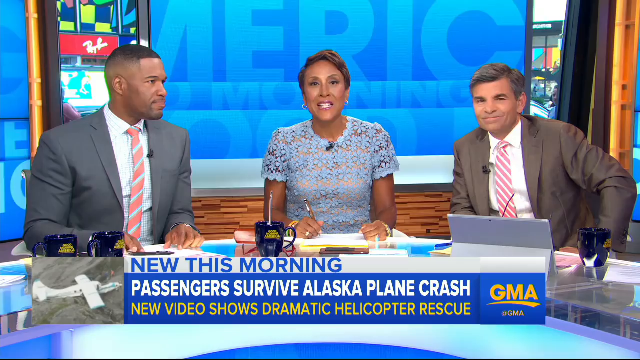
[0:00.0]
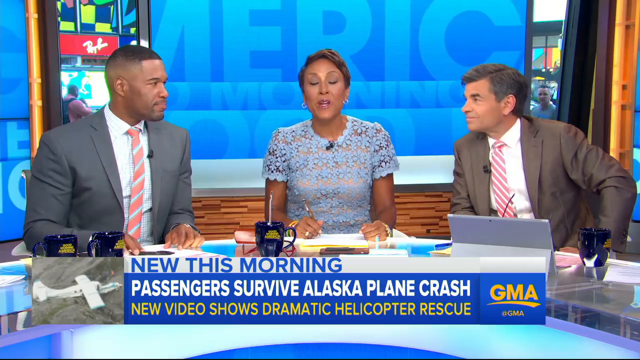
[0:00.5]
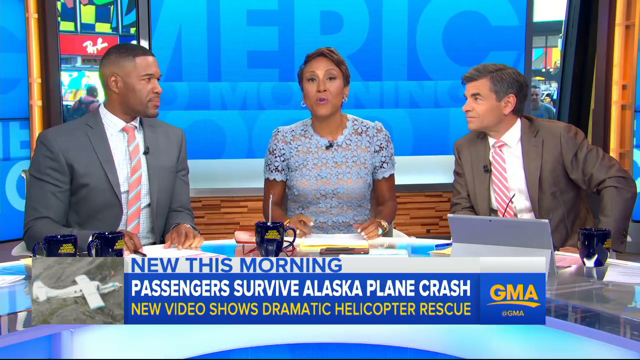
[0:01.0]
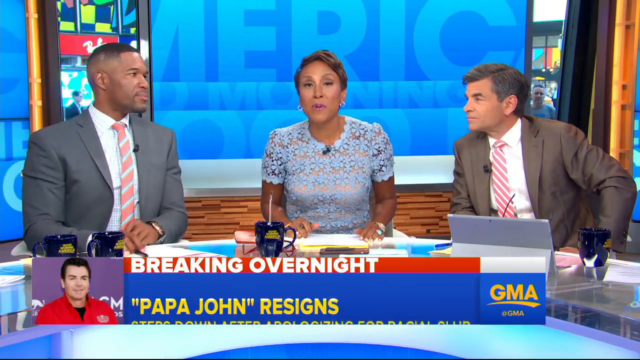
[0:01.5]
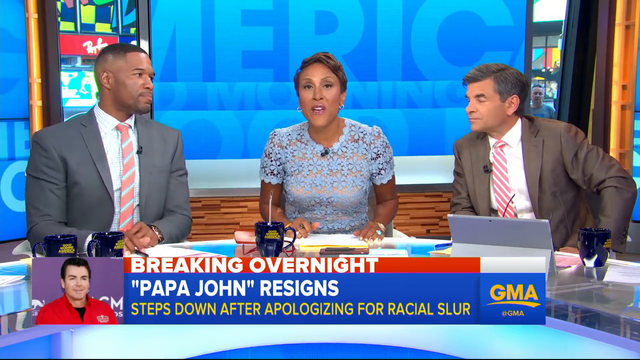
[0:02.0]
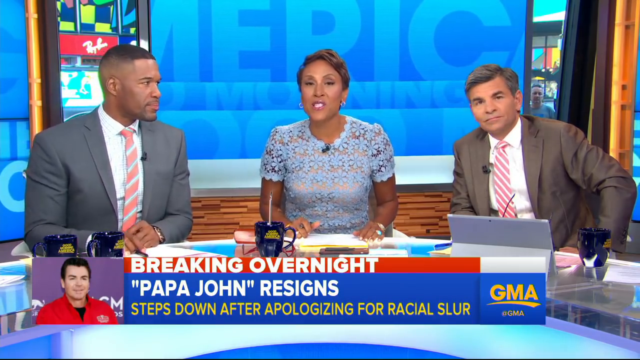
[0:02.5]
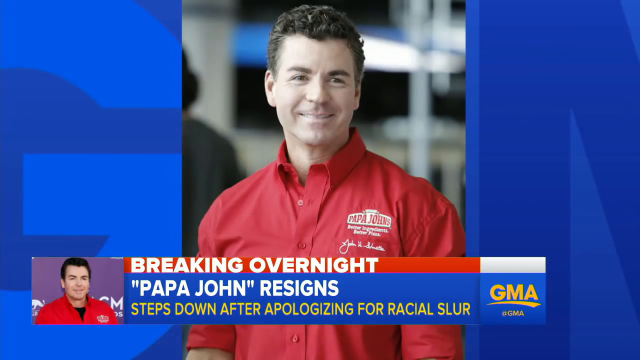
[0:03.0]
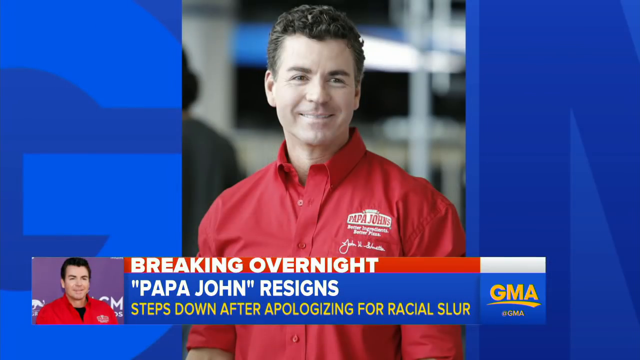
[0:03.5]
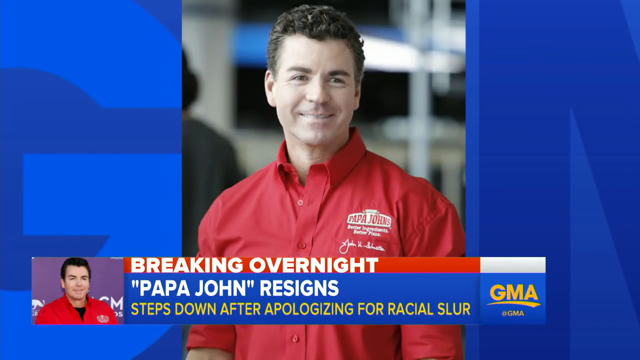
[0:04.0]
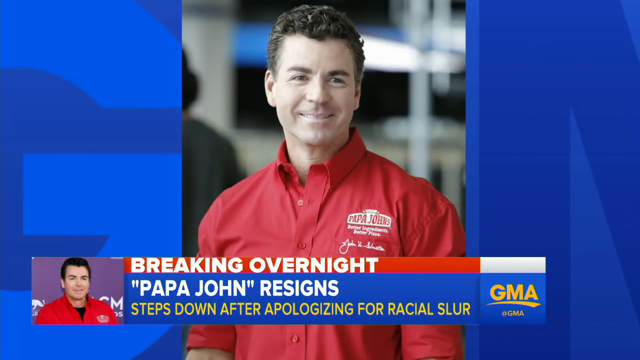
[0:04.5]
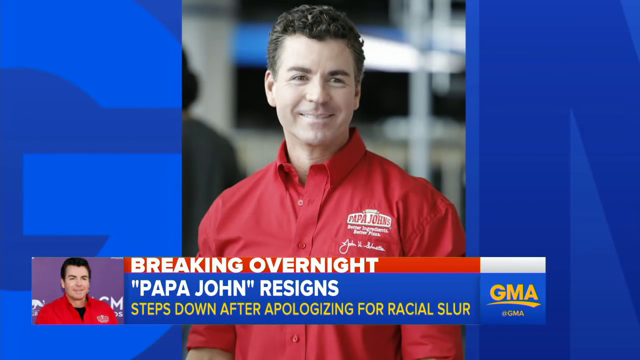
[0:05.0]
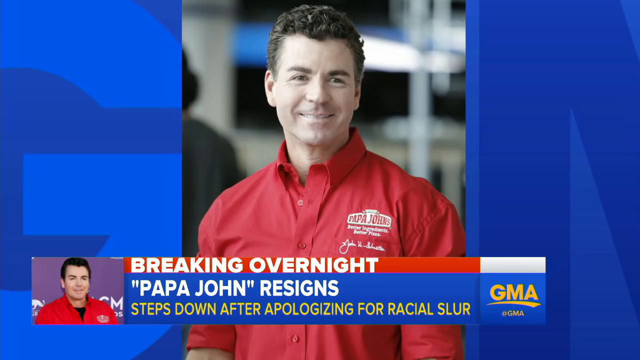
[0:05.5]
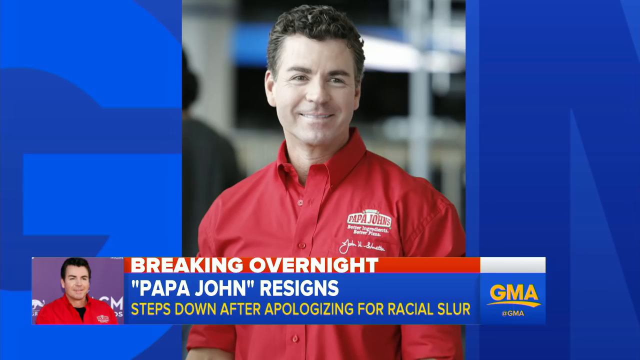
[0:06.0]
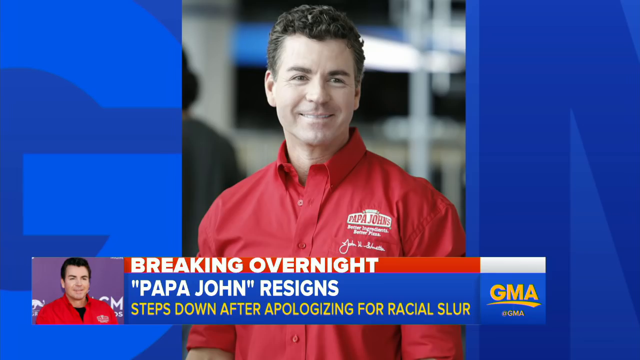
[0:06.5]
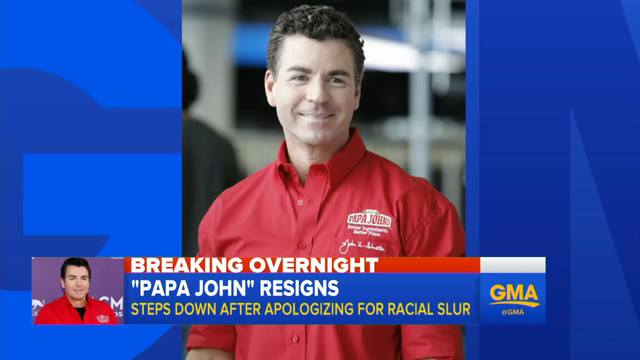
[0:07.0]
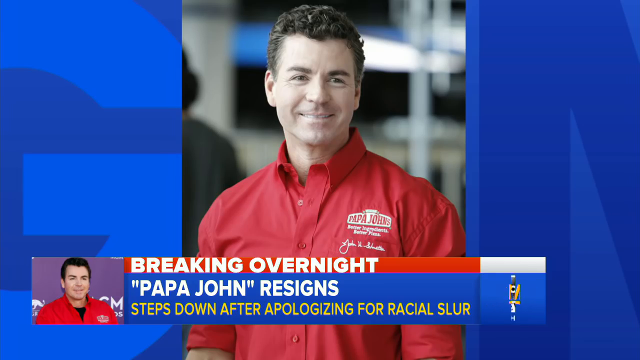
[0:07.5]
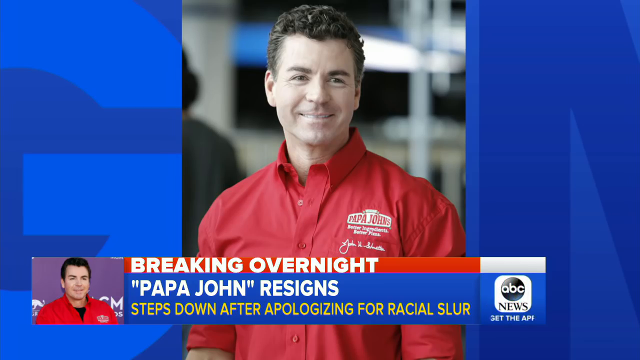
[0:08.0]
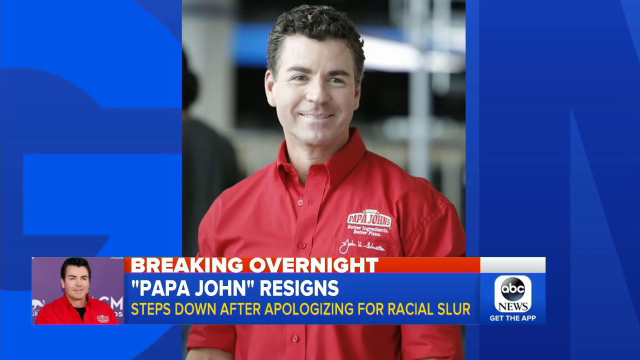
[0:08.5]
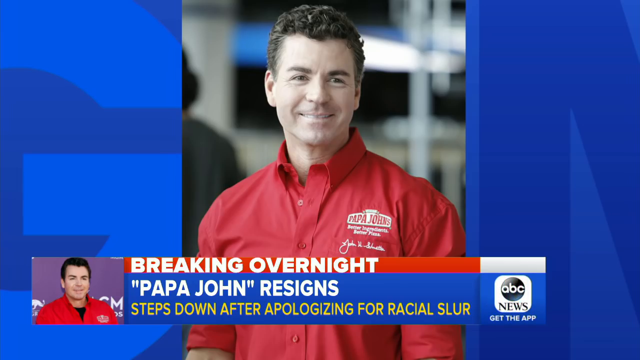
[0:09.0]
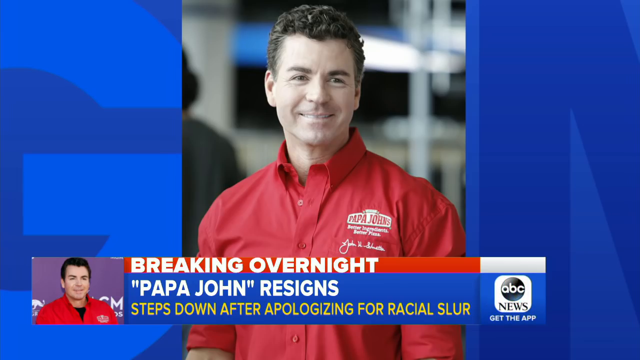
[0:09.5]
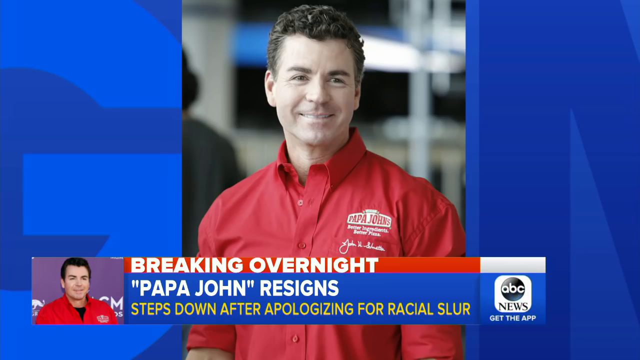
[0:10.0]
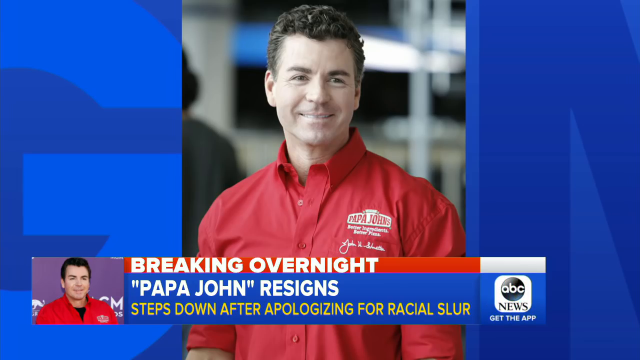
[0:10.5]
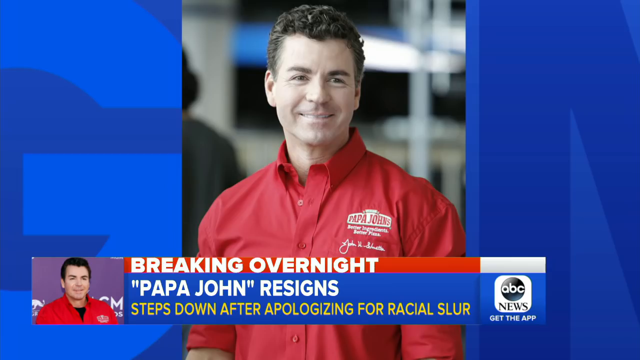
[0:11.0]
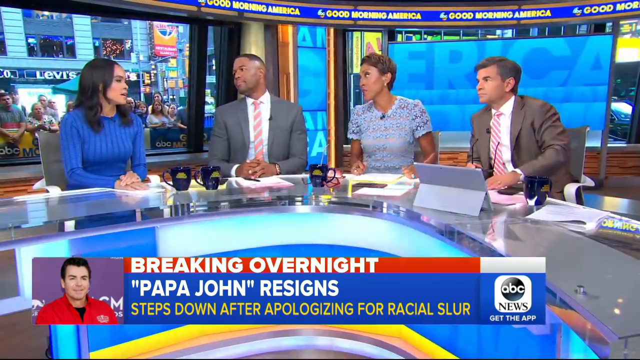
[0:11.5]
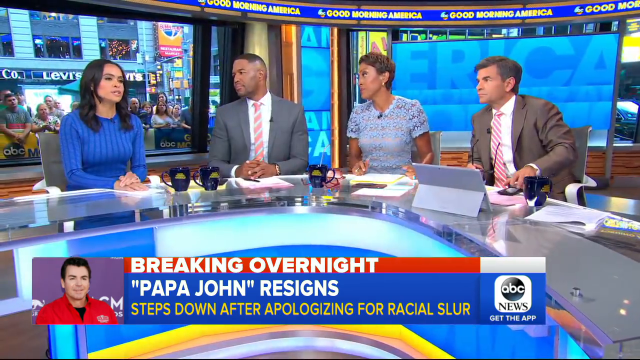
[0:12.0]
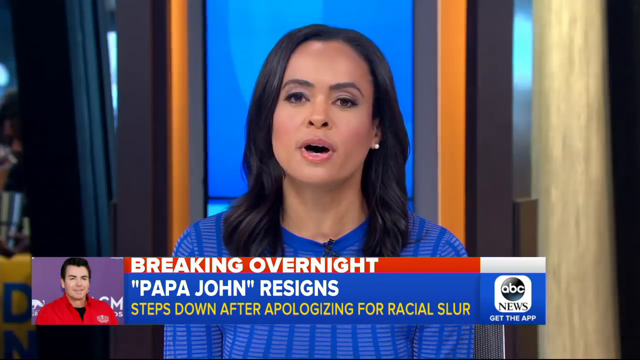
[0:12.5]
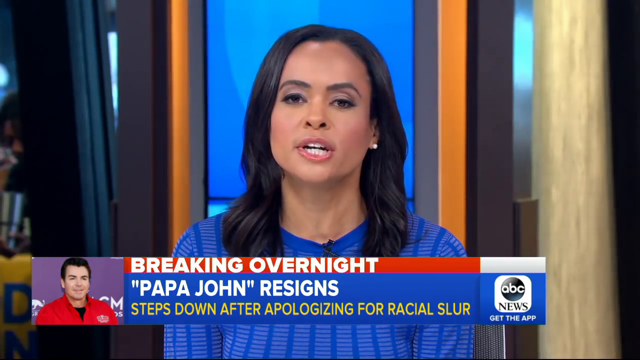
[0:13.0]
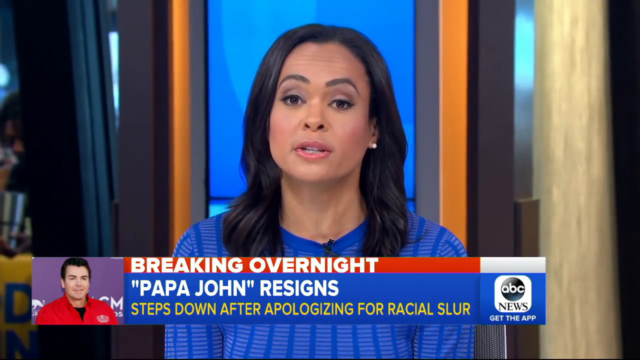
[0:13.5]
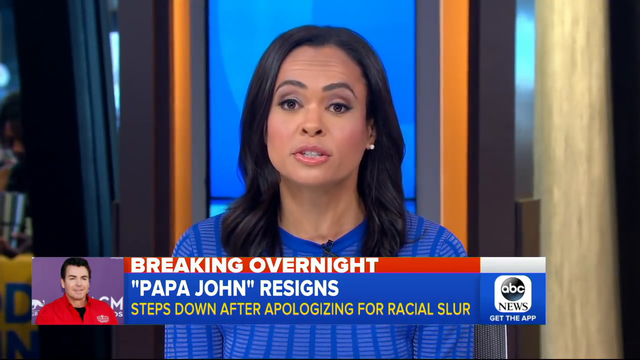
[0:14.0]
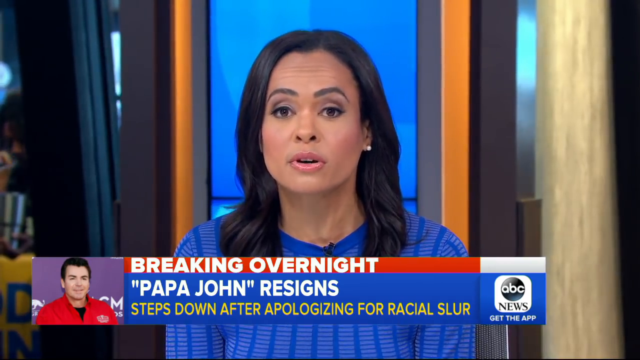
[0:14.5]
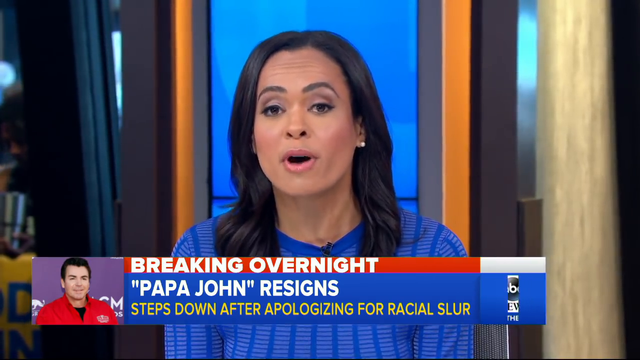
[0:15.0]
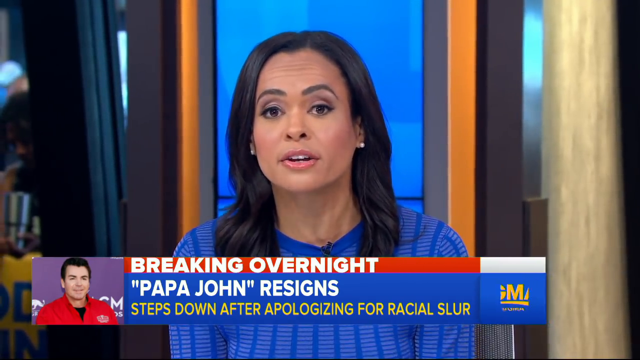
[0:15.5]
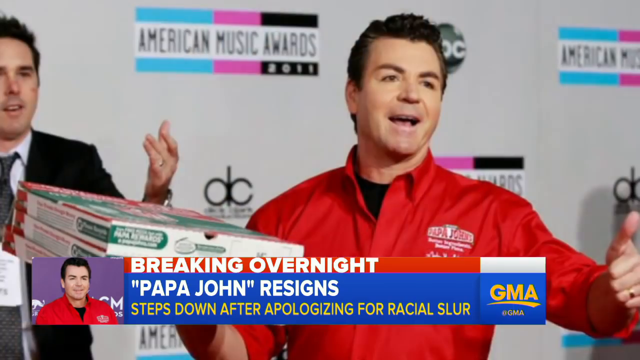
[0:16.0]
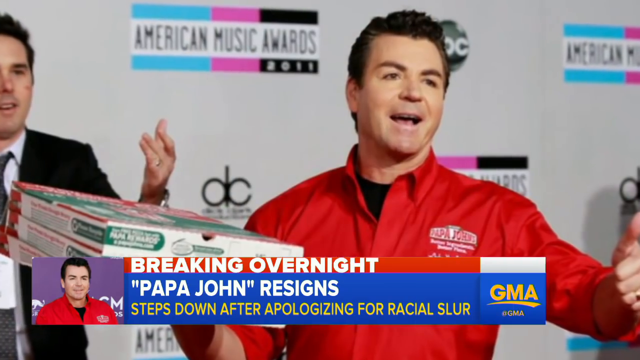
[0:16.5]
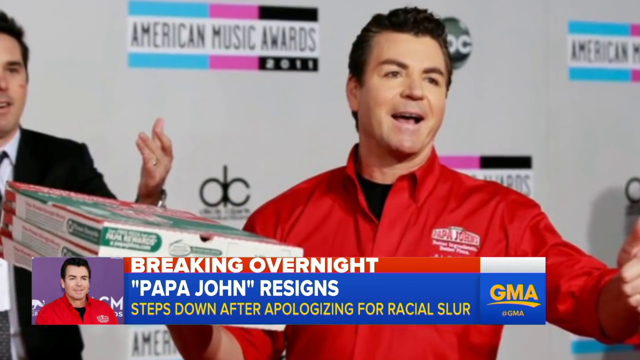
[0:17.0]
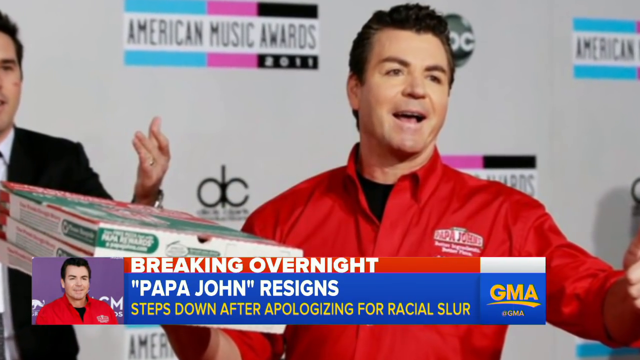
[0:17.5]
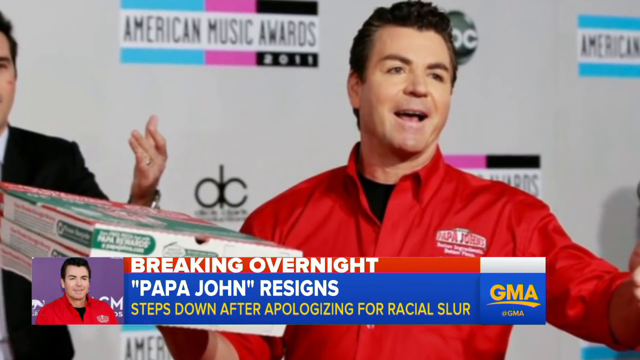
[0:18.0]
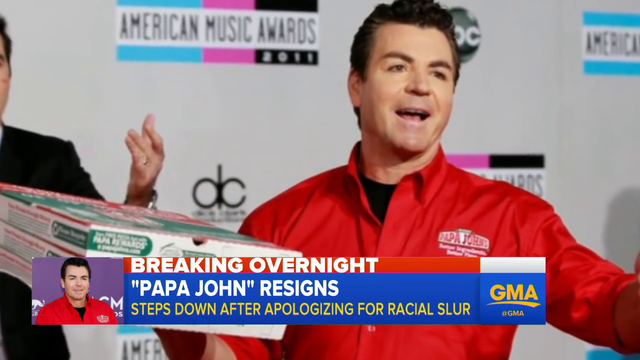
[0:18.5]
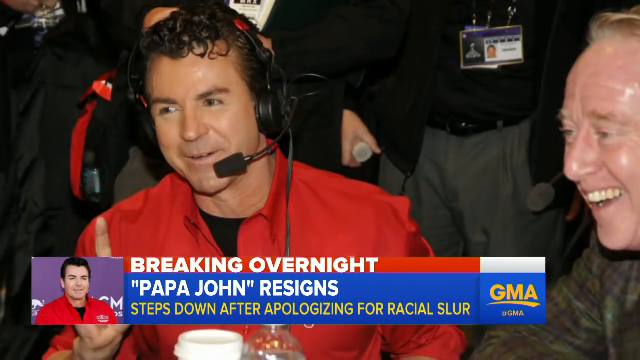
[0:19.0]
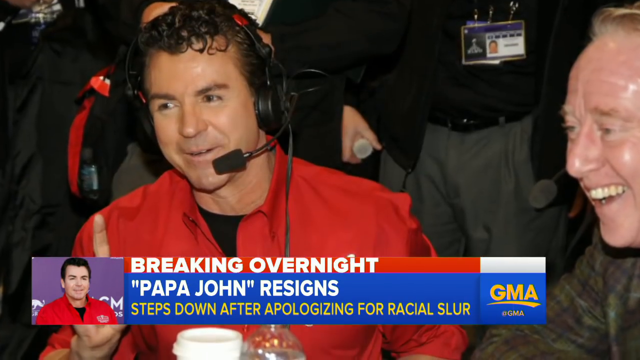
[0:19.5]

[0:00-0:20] A news report covers Papa John resigning and stepping down after apologizing for a racial slur, showing pictures of a man wearing a red shirt. A news broadcaster, a woman wearing blue, talks about the story while pictures of the man are shown. A man wears a gray suit jacket with blue and red attire and a blue shirt, another man wears a brown jacket with a white shirt and a red and white tie, and a woman wears a blue net dress. They discuss the resignation, presented as breaking overnight news on ABC News. Another man is added to the screen, along with another woman wearing blue. The man in the story seems to be an athlete and seems to be famous; he apparently apologized in public for a racial slur and then stepped down.